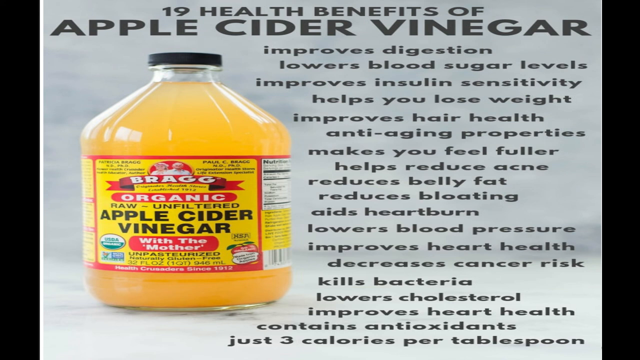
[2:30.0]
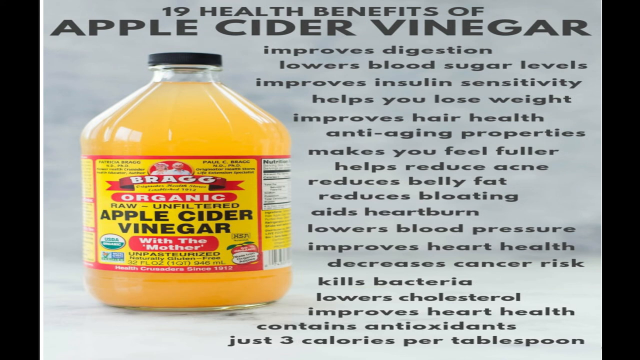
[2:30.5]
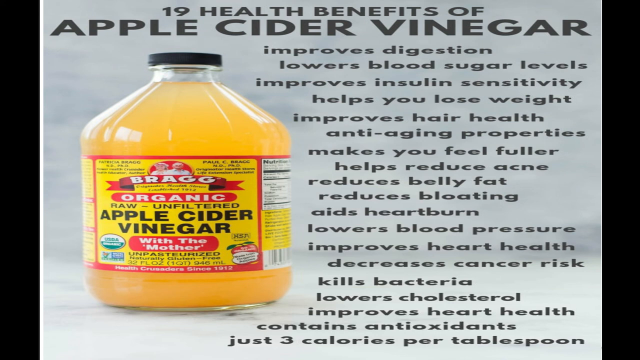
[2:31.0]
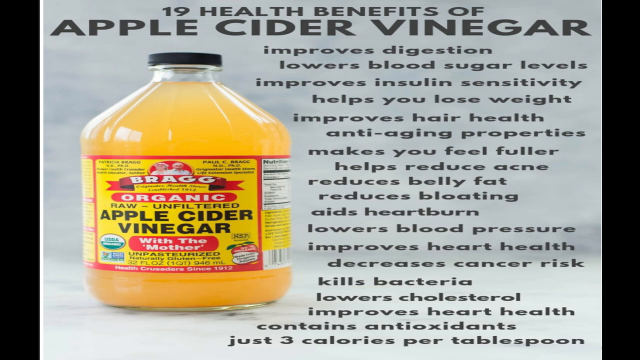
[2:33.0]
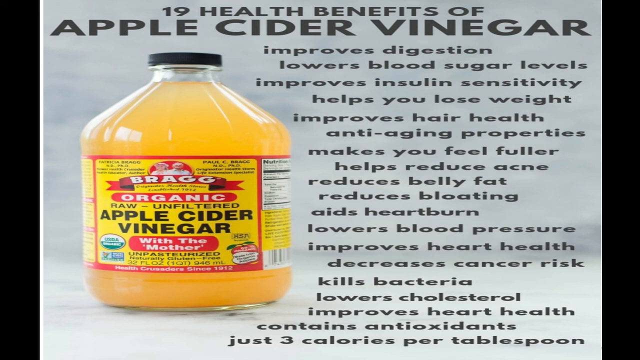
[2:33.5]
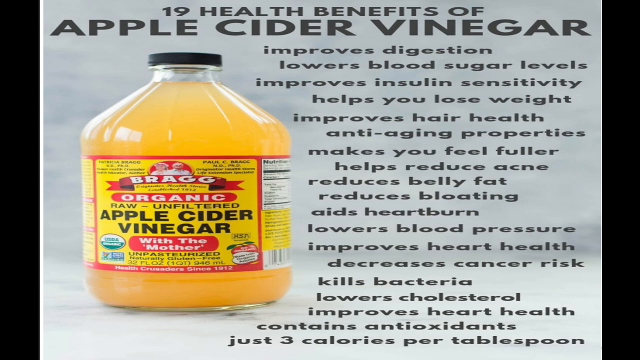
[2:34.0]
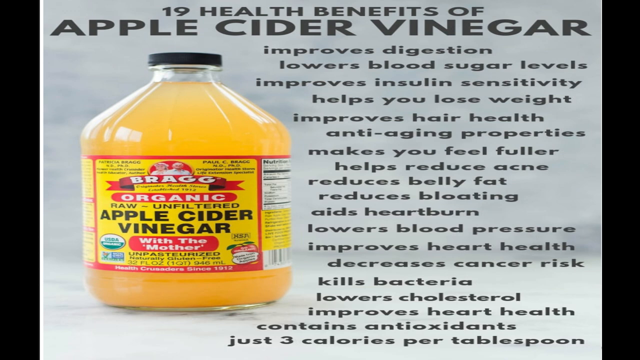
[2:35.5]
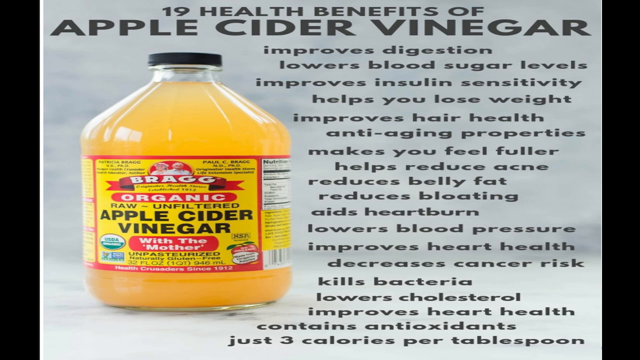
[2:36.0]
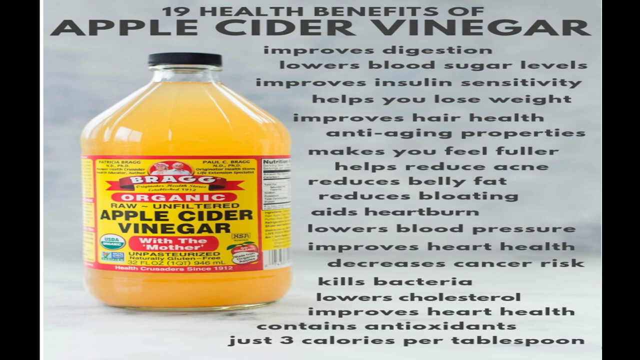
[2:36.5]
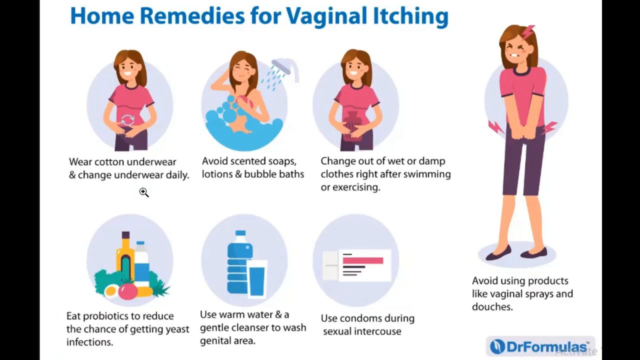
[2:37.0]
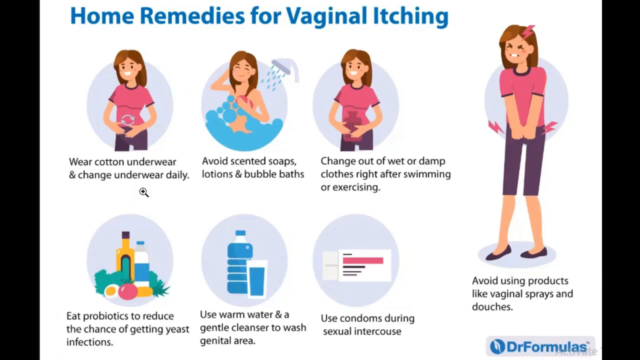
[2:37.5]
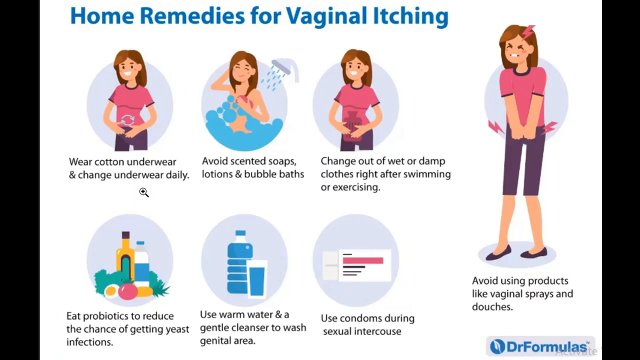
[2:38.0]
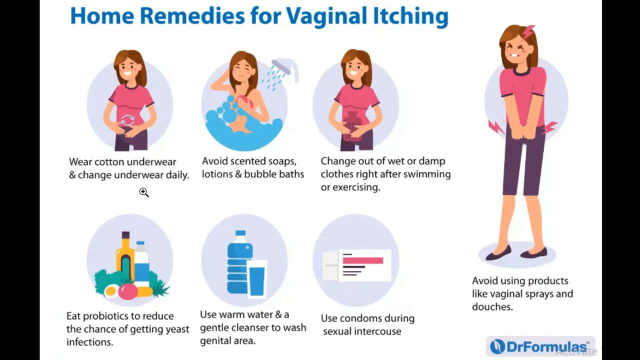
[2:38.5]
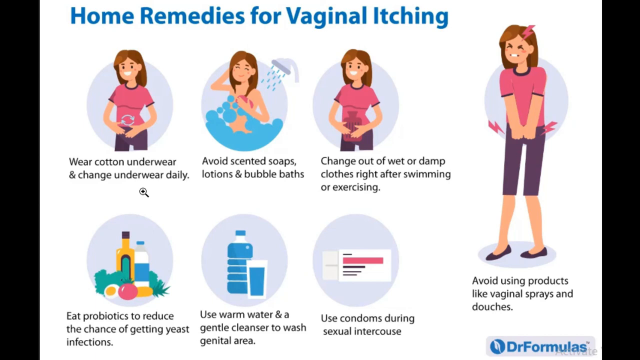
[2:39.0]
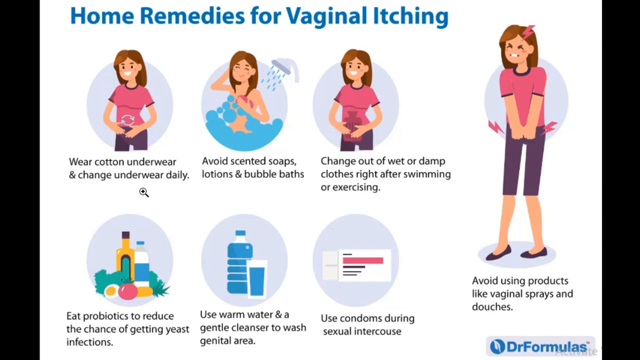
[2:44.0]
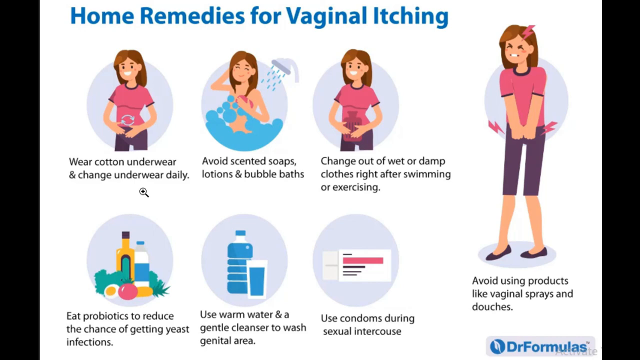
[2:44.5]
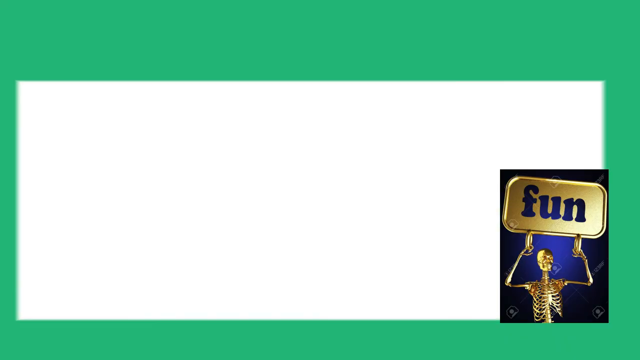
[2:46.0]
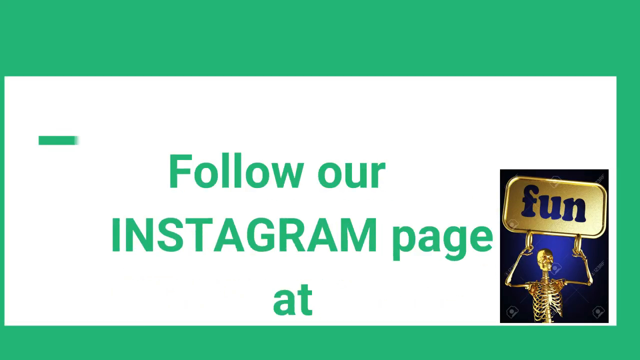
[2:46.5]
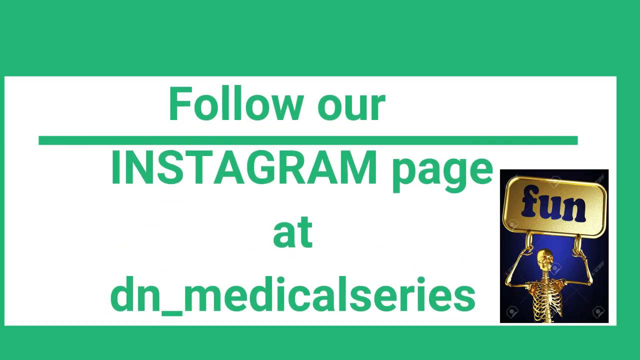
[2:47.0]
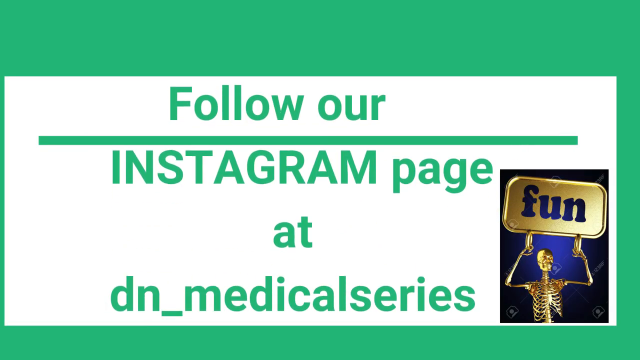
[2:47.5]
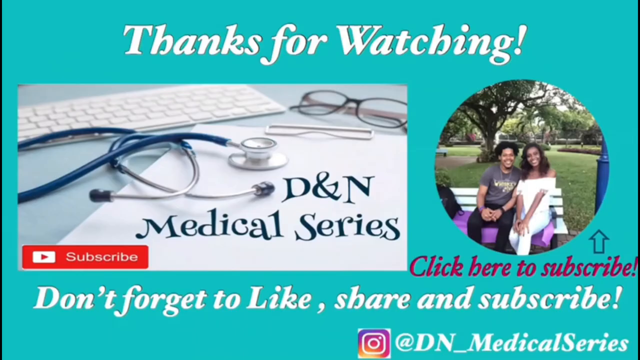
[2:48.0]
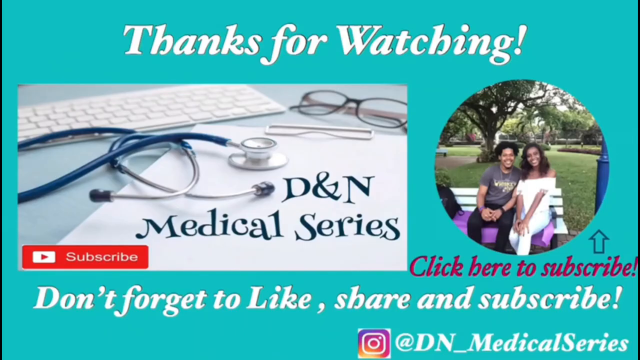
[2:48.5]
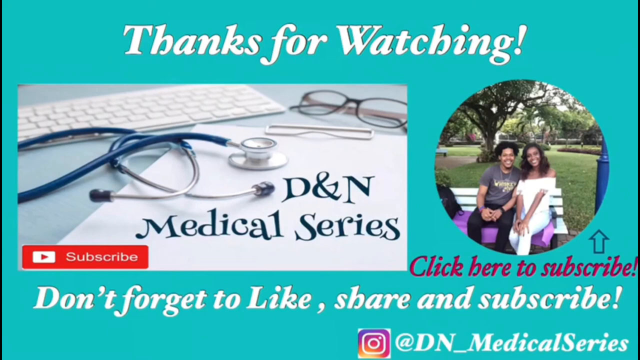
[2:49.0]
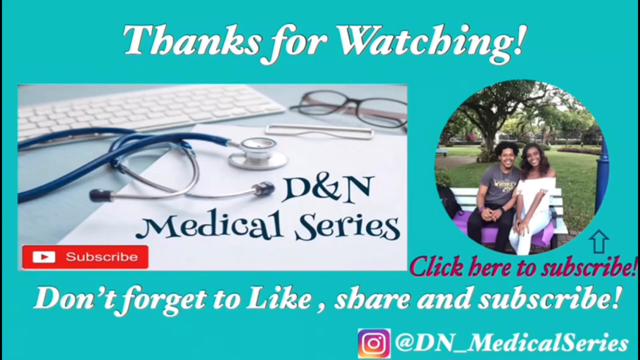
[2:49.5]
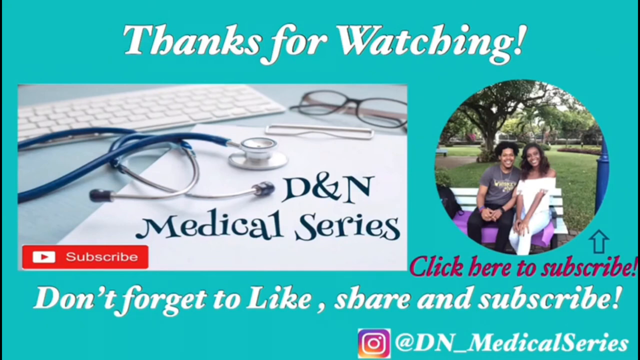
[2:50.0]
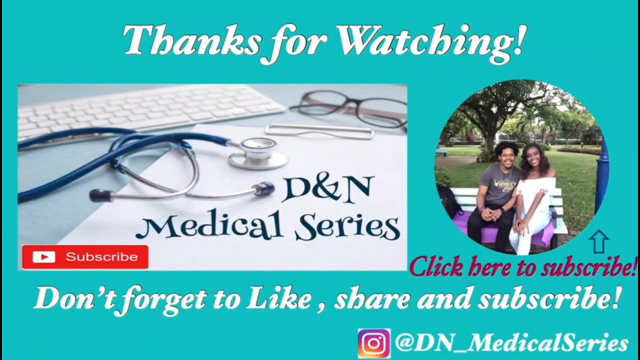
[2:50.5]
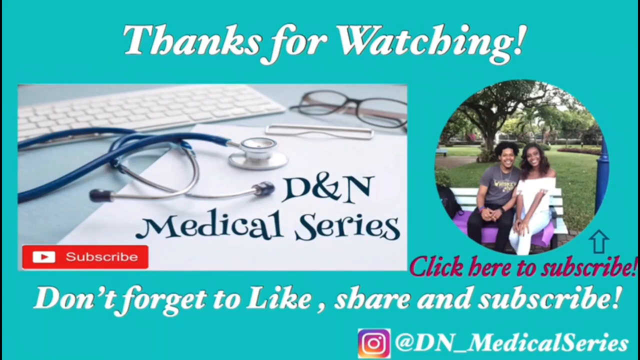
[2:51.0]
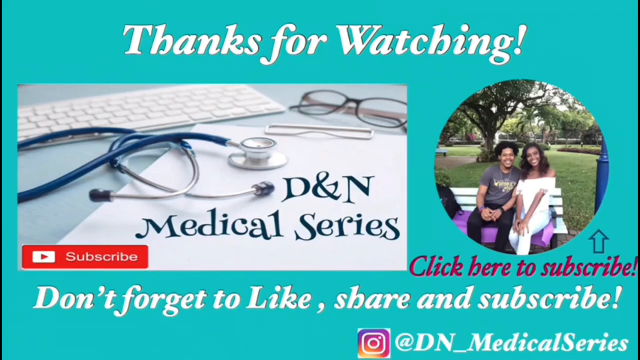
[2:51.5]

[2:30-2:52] A screen shows a jar of apple cider vinegar, with "19 health benefits of apple cider vinegar" at the top in bold black text. Below is a large 2-gallon jug of yellow apple cider vinegar with a label in red, blue and black lettering stating the ingredients, and a large black cap. The background appears to be neutral. The benefits listed include improving digestion, lowering blood sugar levels, improving insulin sensitivity, helping weight loss, improving hair health, anti-aging properties, feeling fuller, reducing fat buildup, lowering blood pressure, decreasing cancer risk, killing bacteria and heart health. The video then goes into its ending.